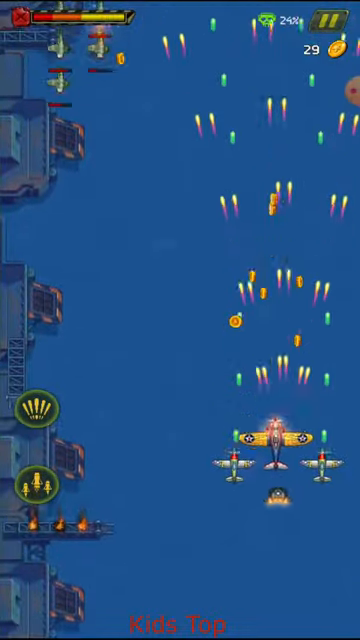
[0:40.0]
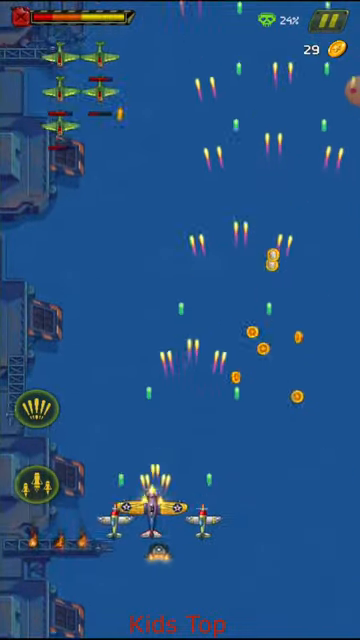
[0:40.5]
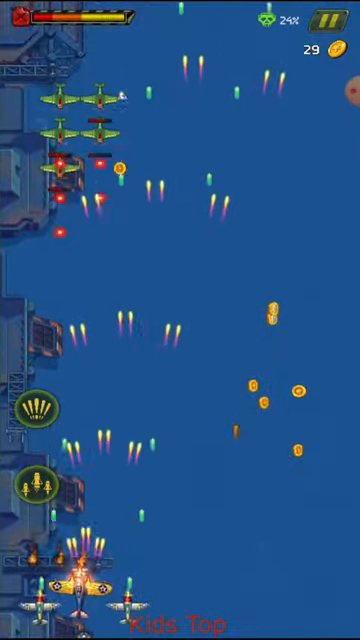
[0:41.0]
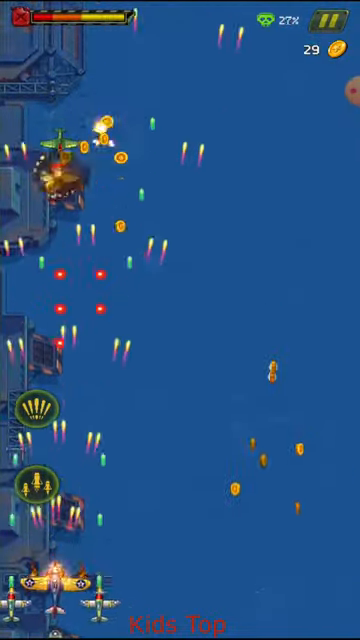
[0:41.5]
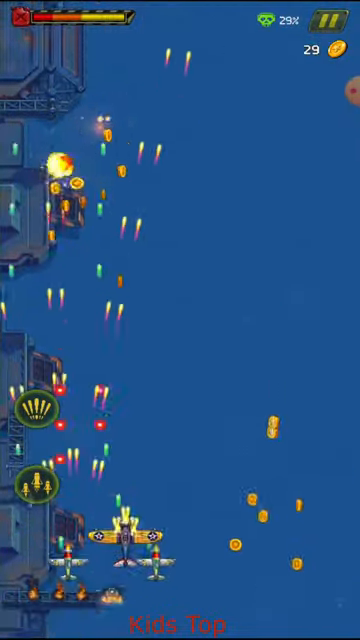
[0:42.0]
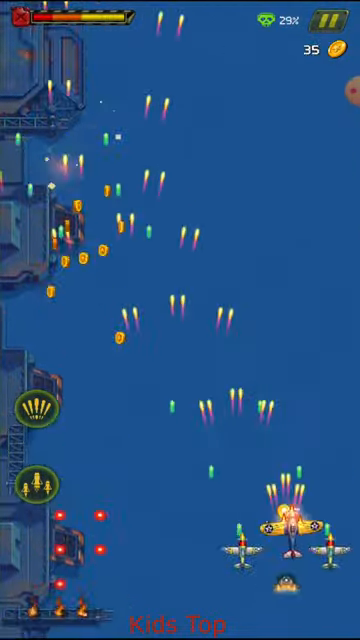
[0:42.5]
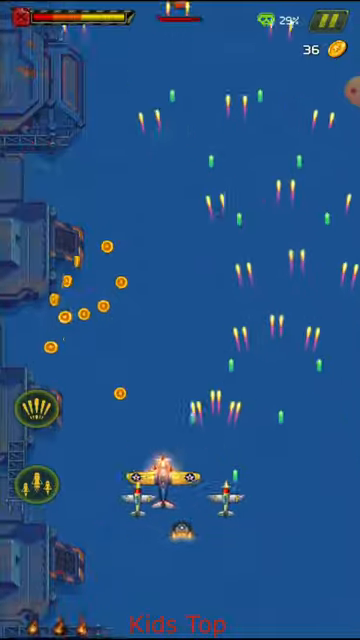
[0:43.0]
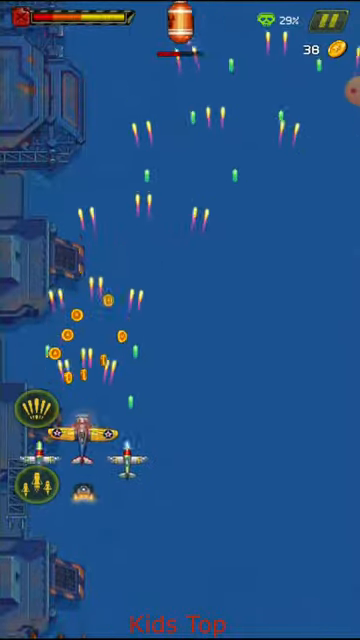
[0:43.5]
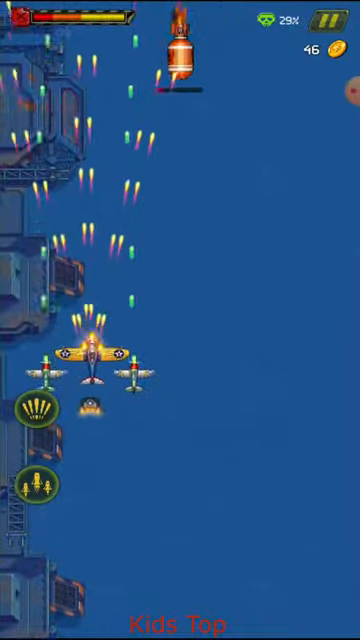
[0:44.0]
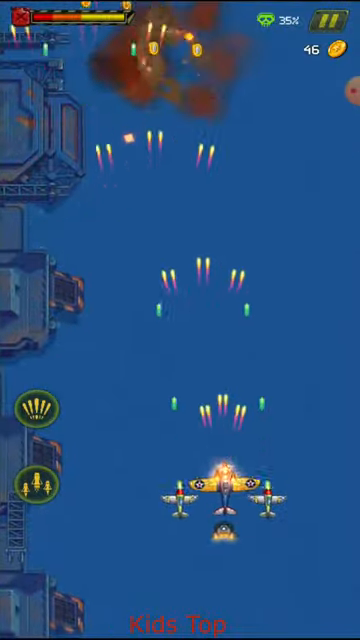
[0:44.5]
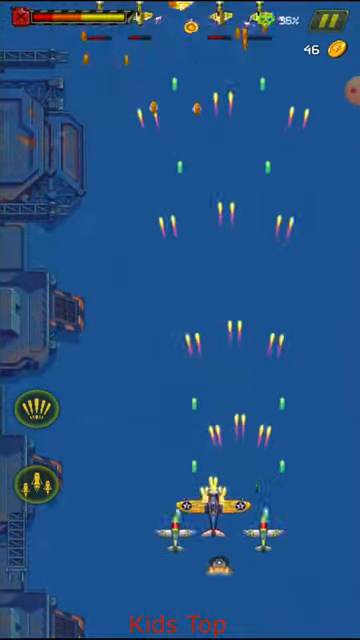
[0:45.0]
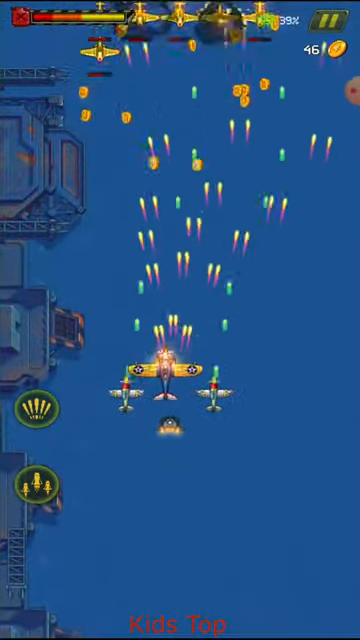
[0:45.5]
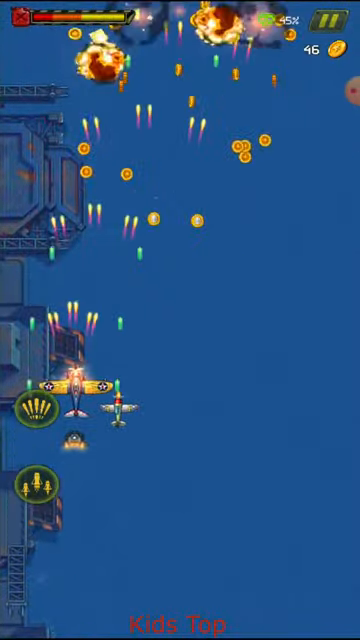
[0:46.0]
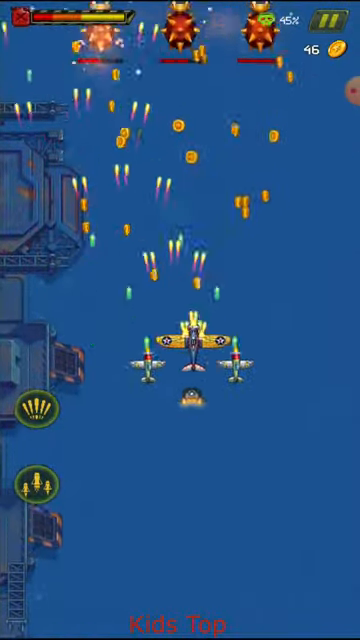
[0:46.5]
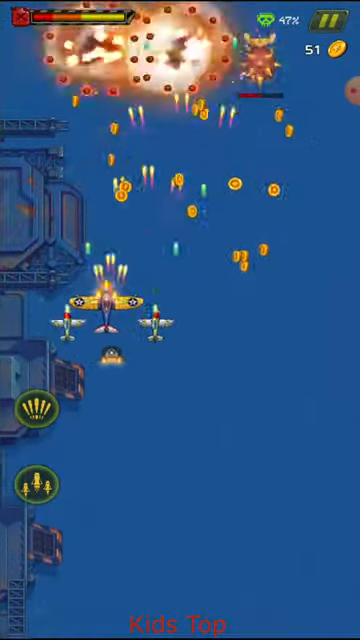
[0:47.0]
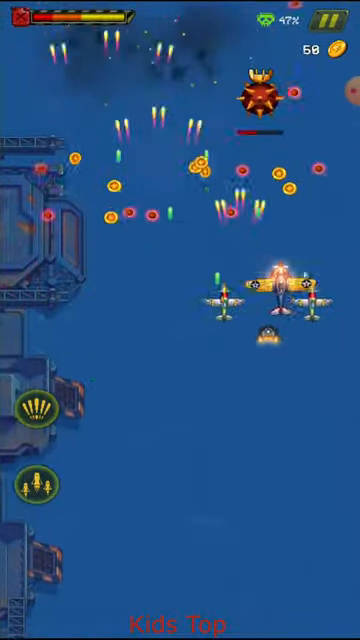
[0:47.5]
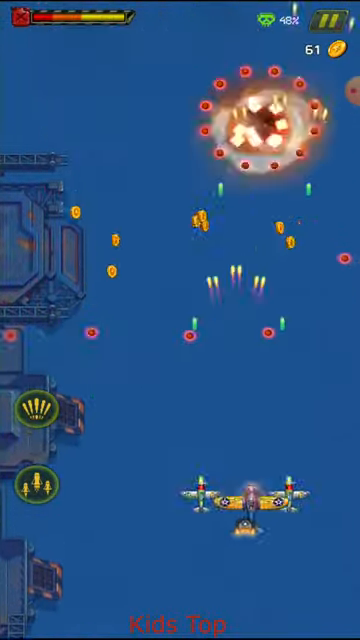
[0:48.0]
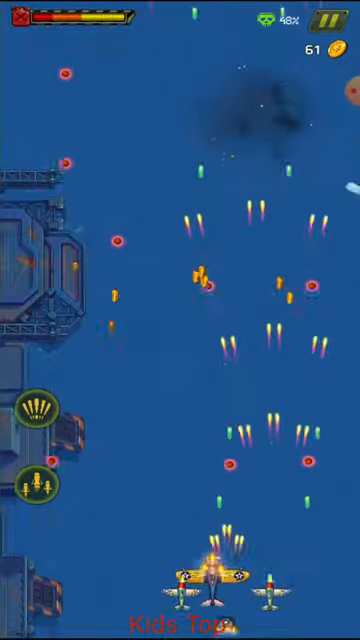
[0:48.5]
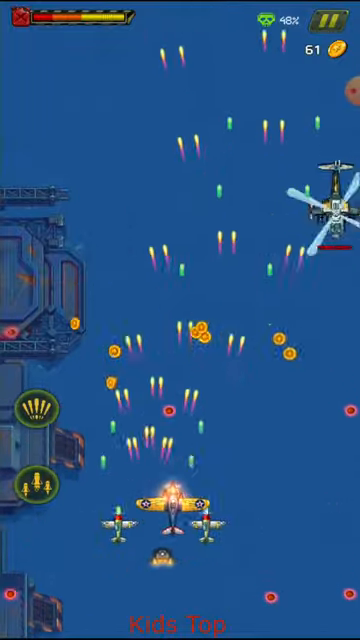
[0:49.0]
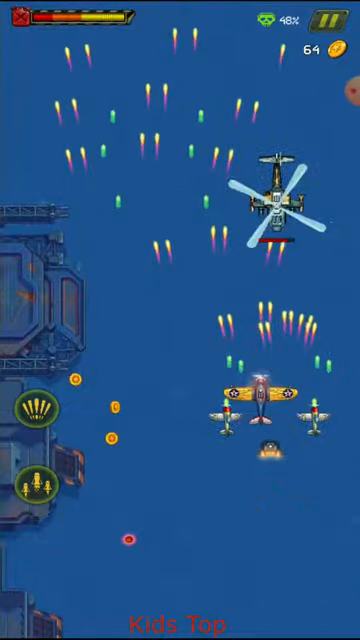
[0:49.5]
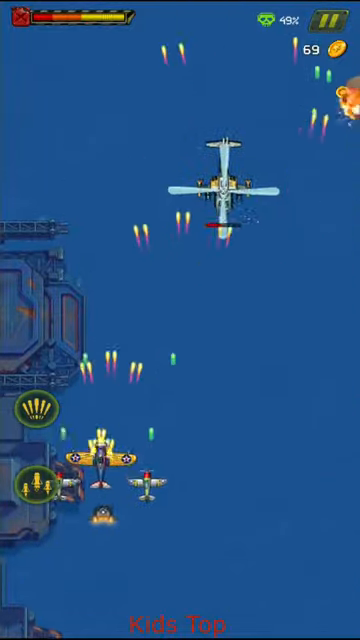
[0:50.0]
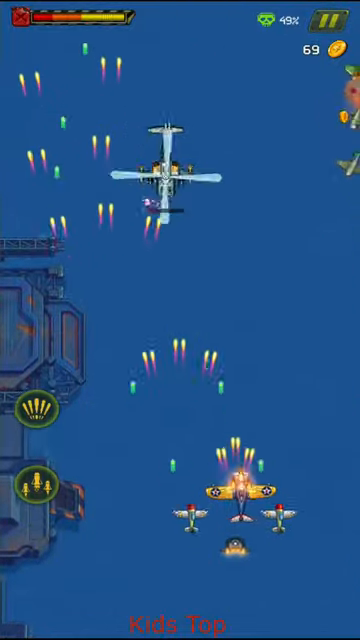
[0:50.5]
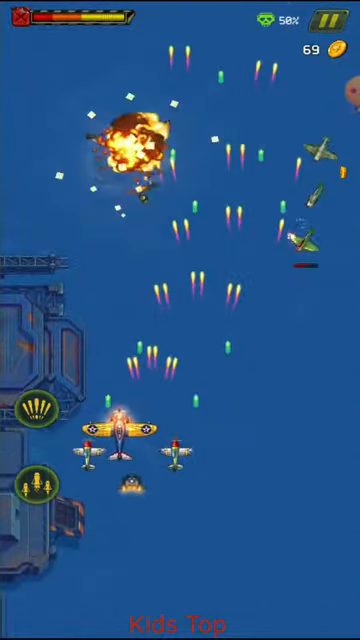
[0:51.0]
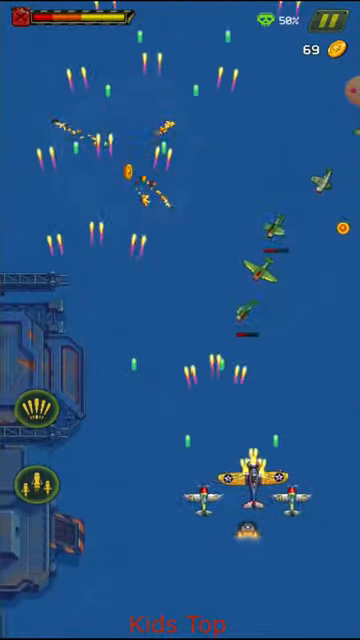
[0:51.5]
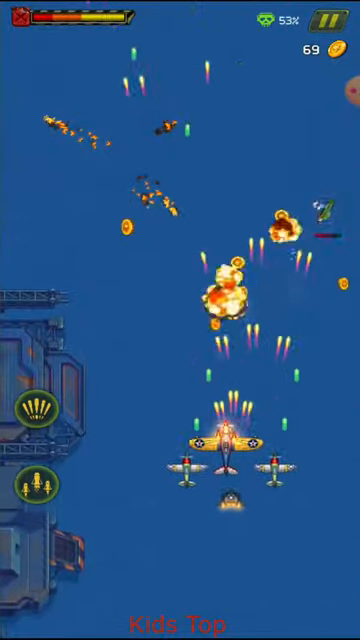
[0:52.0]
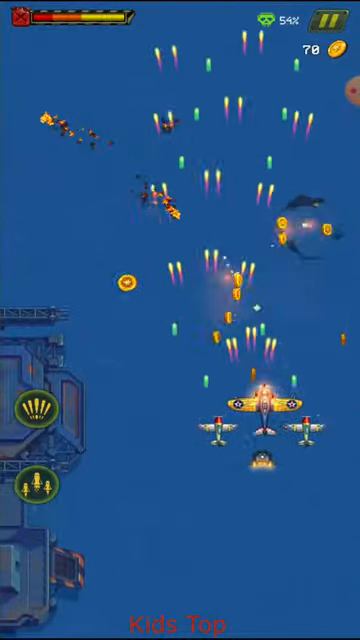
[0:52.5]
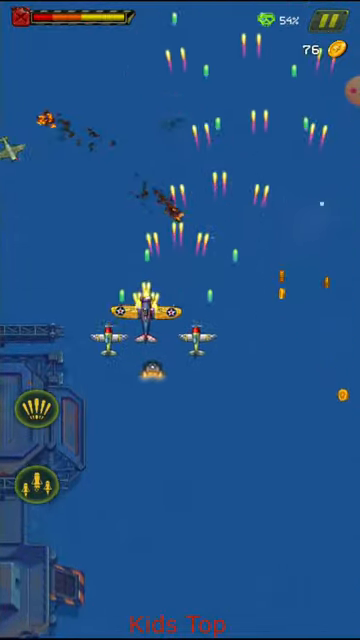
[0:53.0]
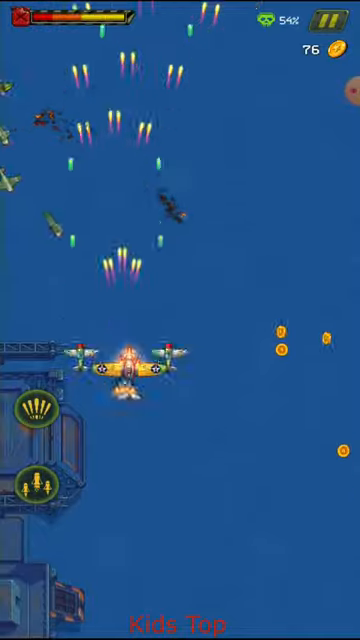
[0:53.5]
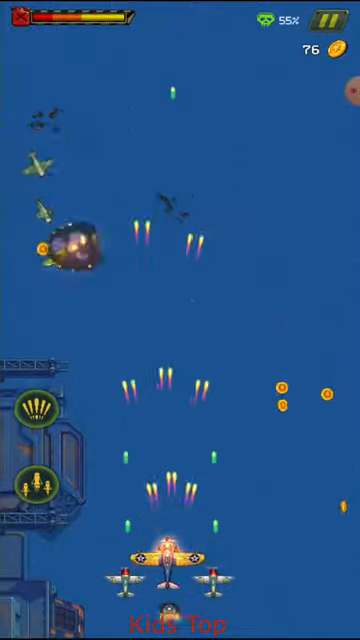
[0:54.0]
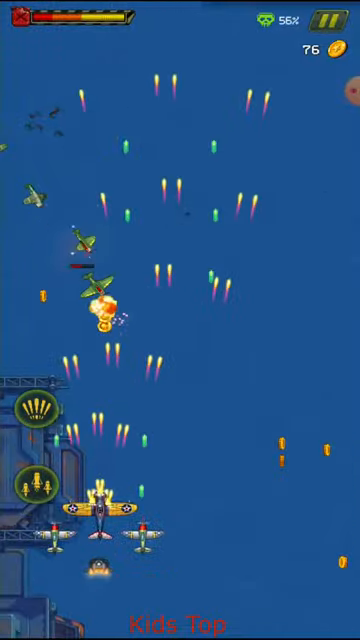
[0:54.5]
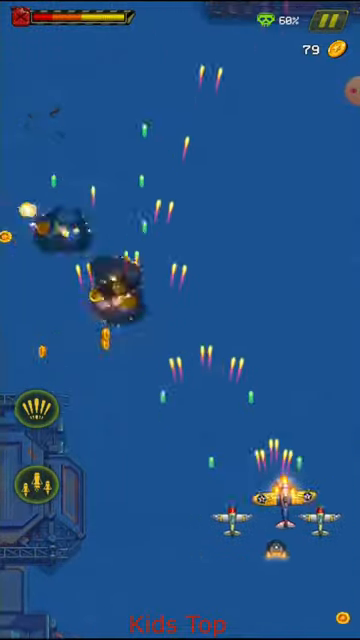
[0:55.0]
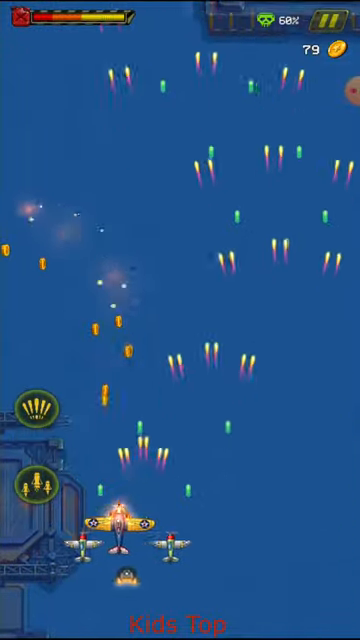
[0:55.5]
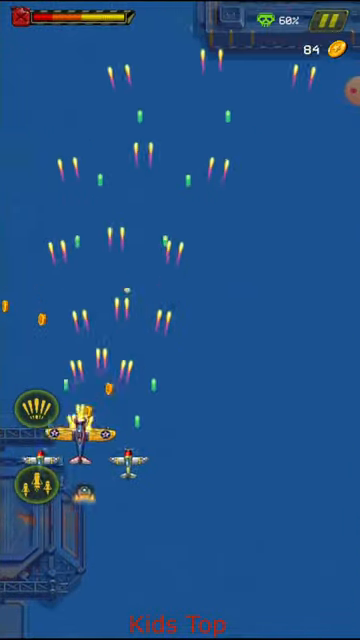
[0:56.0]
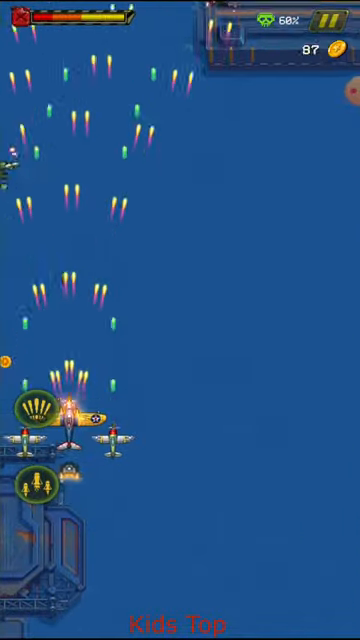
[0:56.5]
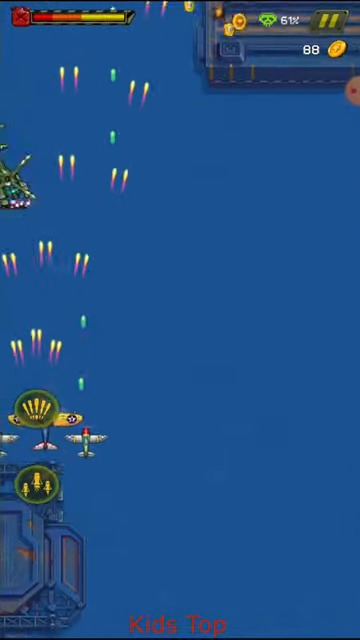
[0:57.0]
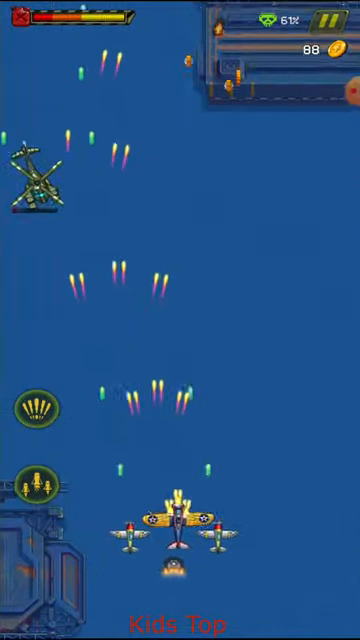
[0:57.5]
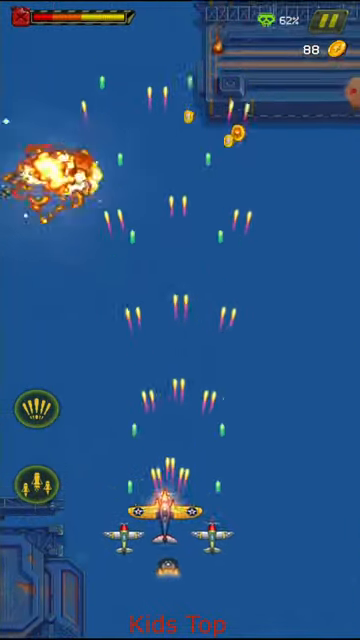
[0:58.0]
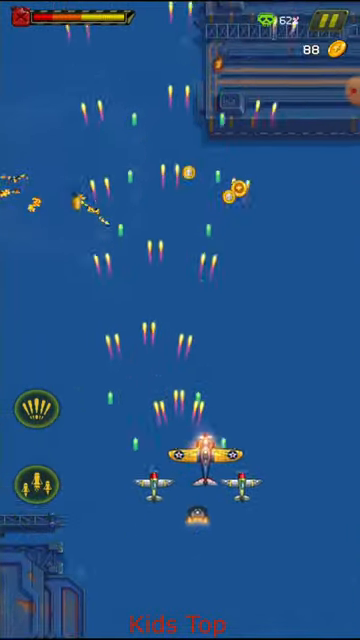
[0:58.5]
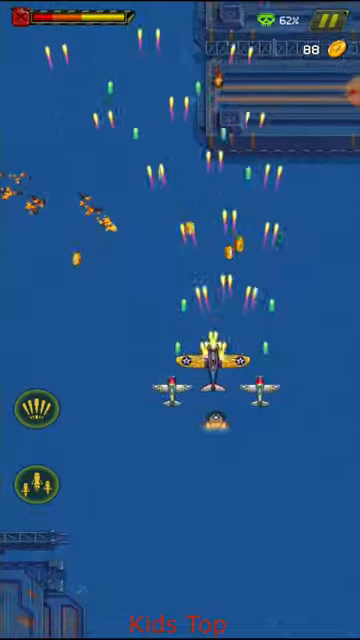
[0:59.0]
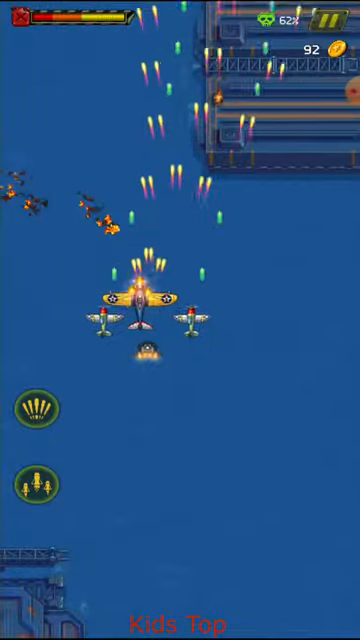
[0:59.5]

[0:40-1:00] The bullet time type video game, probably a mobile game, shows the player controlling three fighter jets, with something behind them that probably gives some kind of boost. The player moves back and forth as the screen progresses, while lots of beams, fireballs and other things shoot at them and enemy planes show up to attack, which the player shoots and kills. There are some symbols on the left side of the screen. The player moves across an ocean with some bases at the bottom, collecting gold-looking items. A helicopter appears and is destroyed; lots of little planes appear and are destroyed; more little planes appear and are destroyed; another helicopter appears and is destroyed as well. The player keeps moving back and forth, dodging enemy fire and collecting gold coins. Stats in the top right corner show 36 gold coins collected, and a health bar in the top left corner shows how much health the player has left. As the screen scrolls up, the player moves up, down and back and forth to avoid enemy fire and kill enemy attackers.